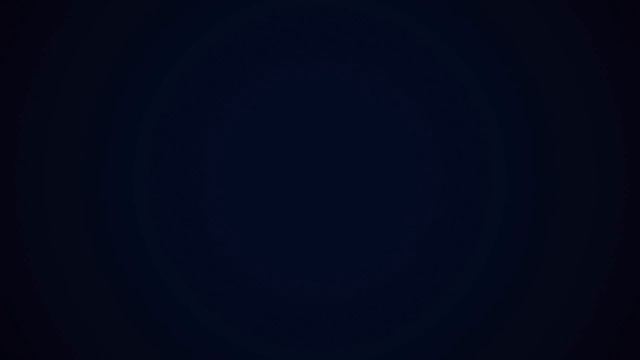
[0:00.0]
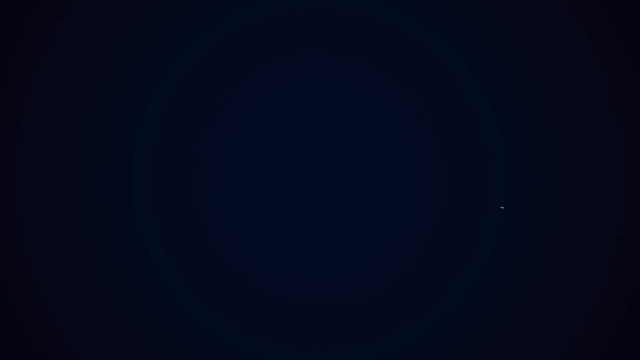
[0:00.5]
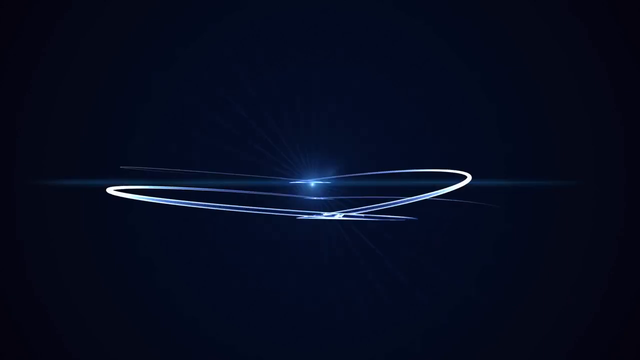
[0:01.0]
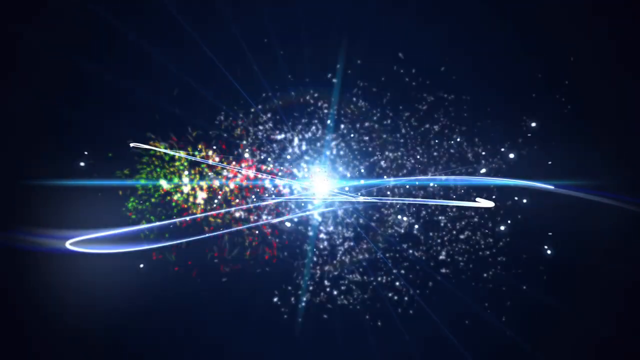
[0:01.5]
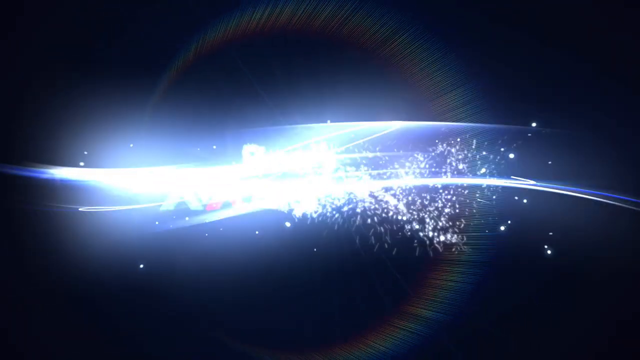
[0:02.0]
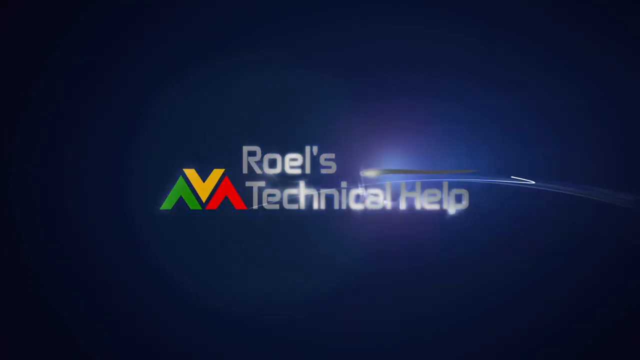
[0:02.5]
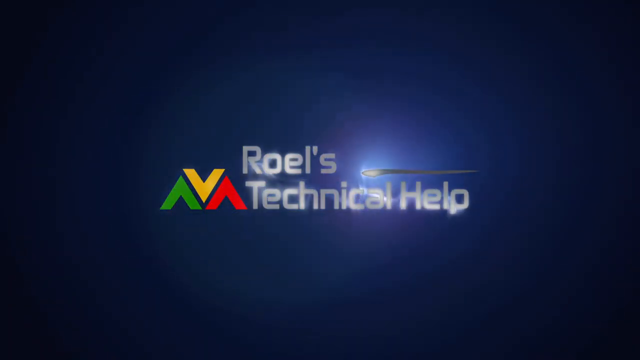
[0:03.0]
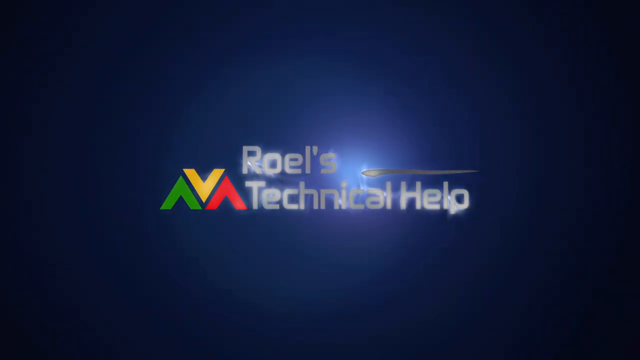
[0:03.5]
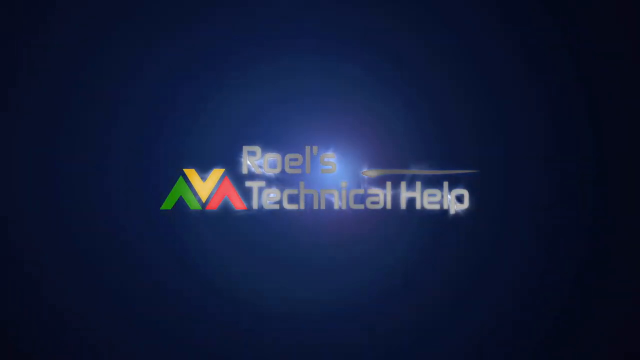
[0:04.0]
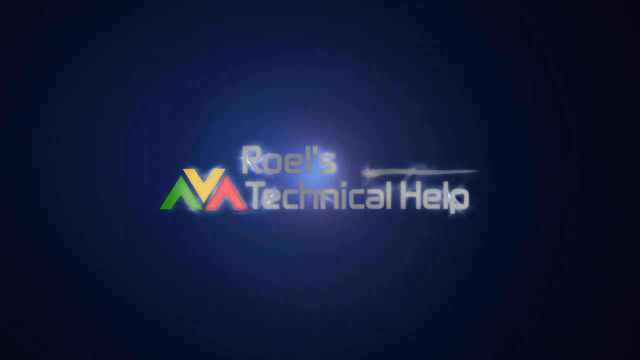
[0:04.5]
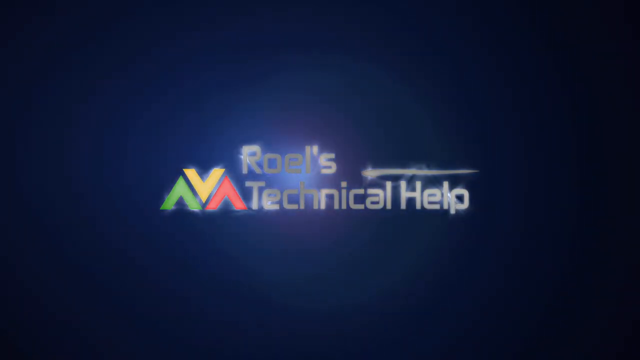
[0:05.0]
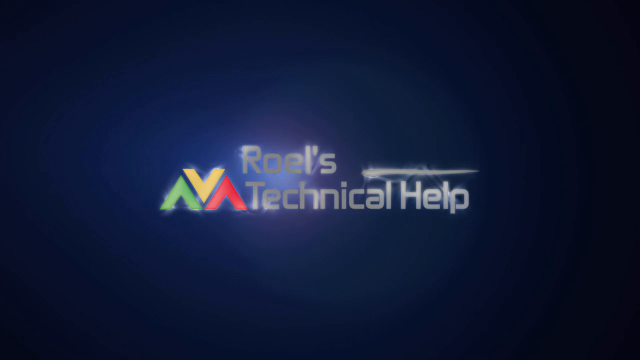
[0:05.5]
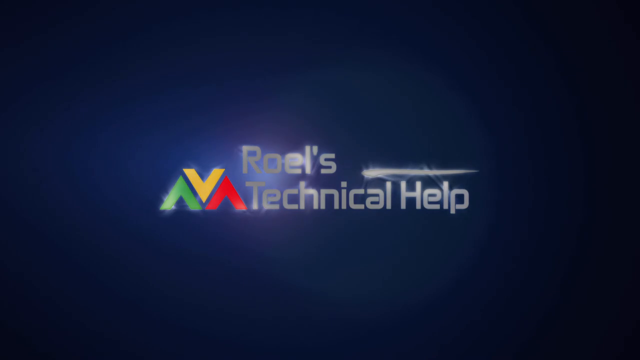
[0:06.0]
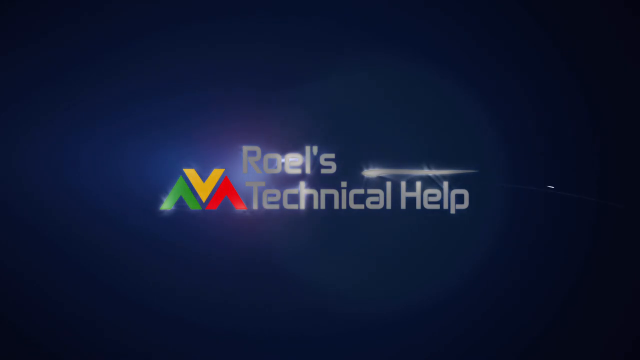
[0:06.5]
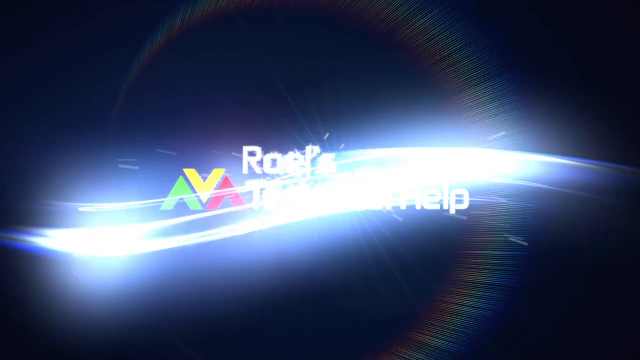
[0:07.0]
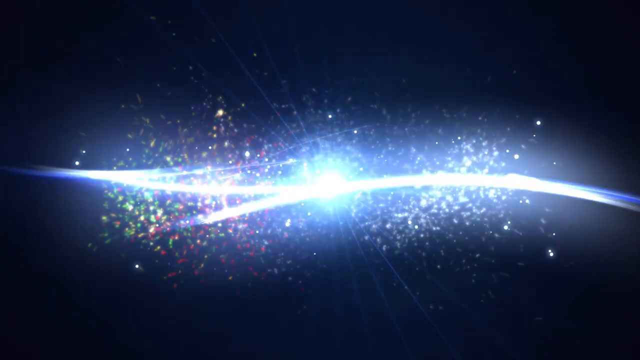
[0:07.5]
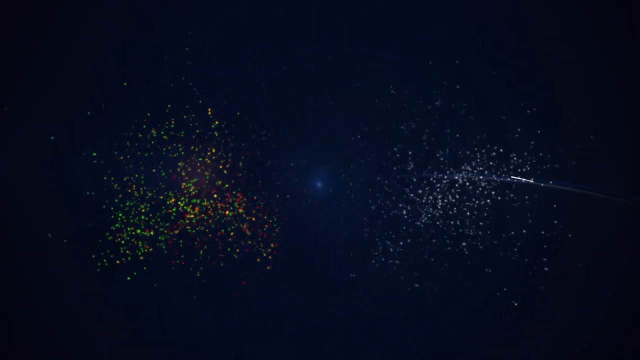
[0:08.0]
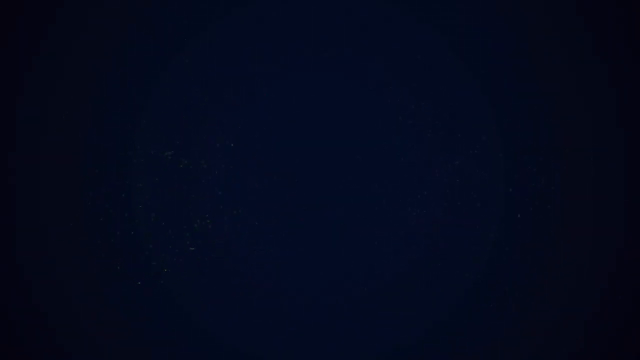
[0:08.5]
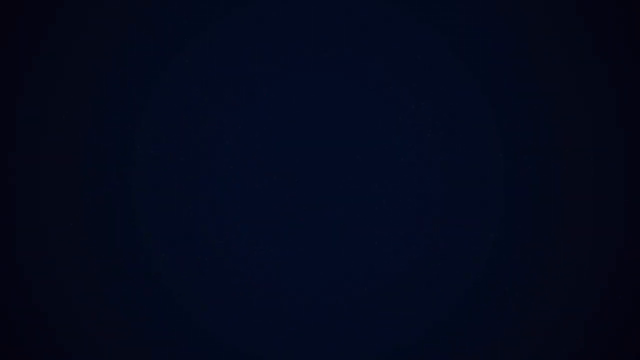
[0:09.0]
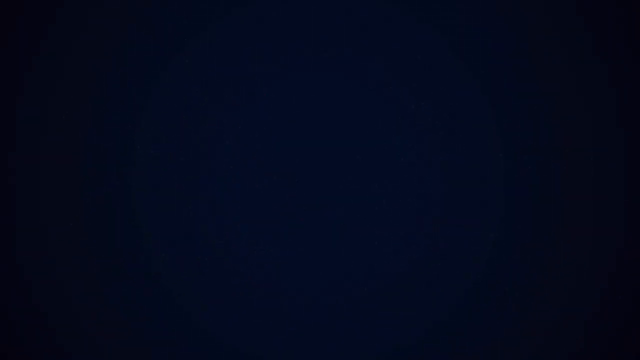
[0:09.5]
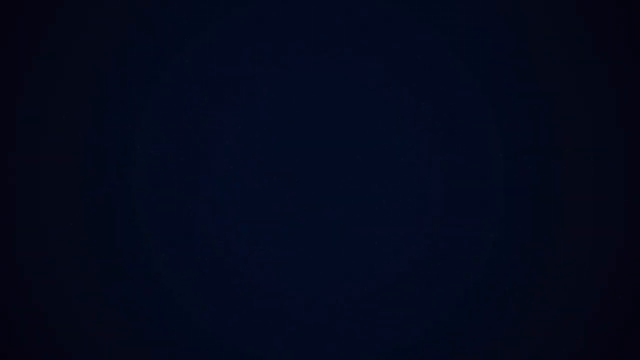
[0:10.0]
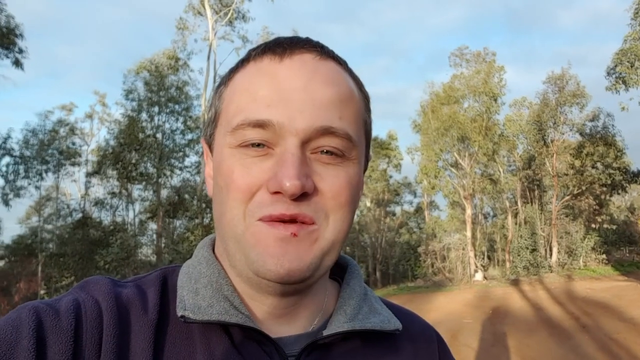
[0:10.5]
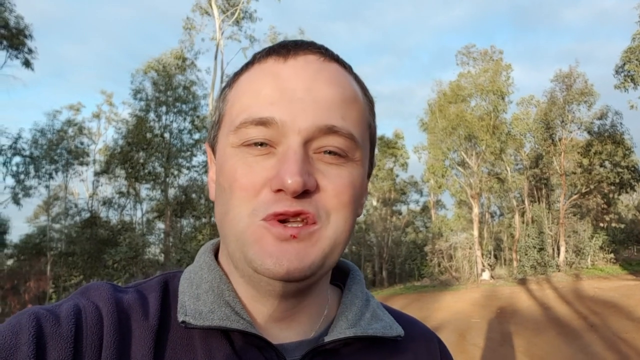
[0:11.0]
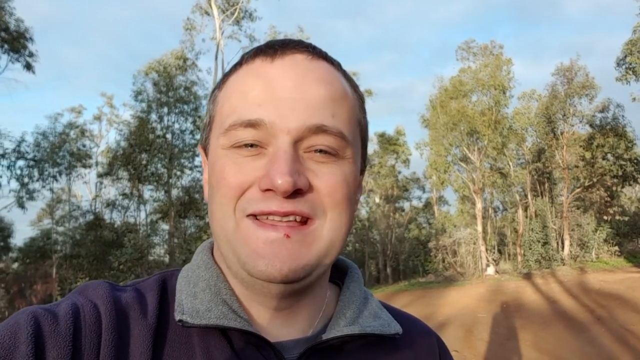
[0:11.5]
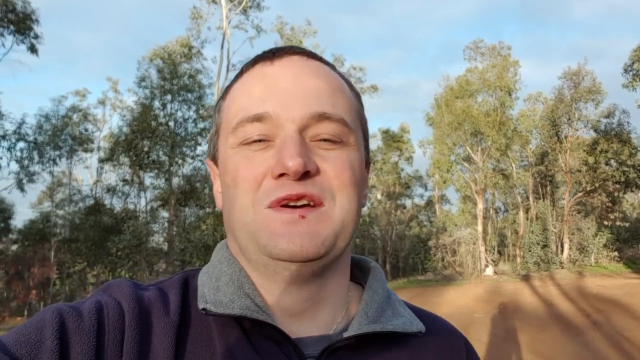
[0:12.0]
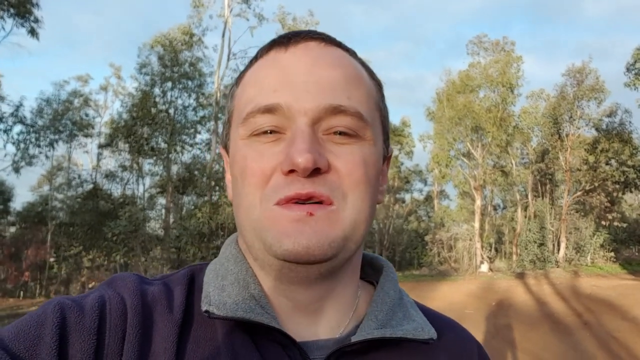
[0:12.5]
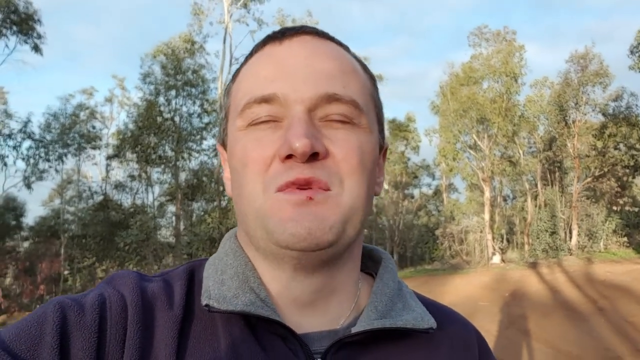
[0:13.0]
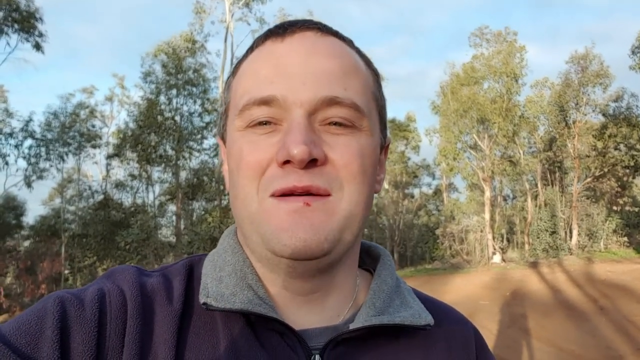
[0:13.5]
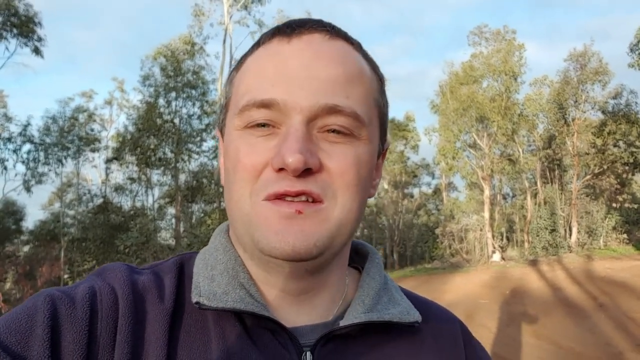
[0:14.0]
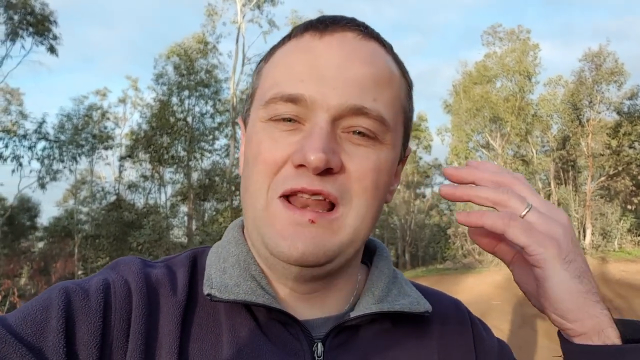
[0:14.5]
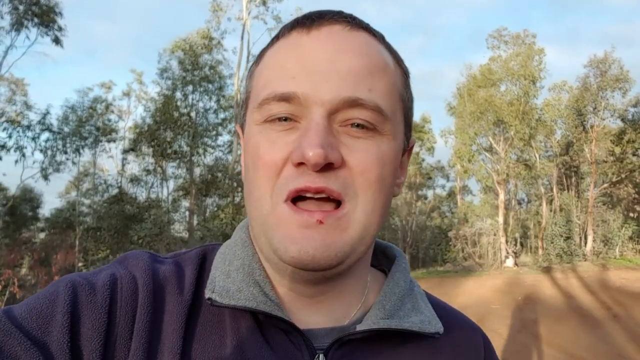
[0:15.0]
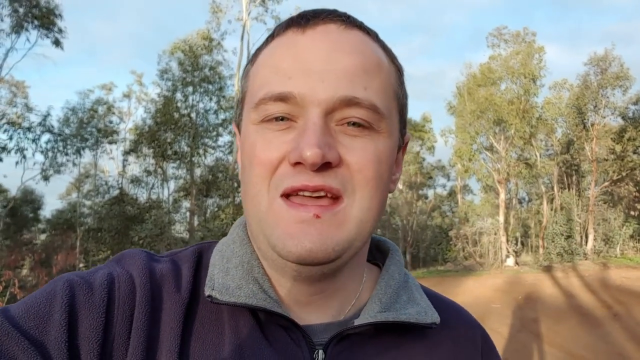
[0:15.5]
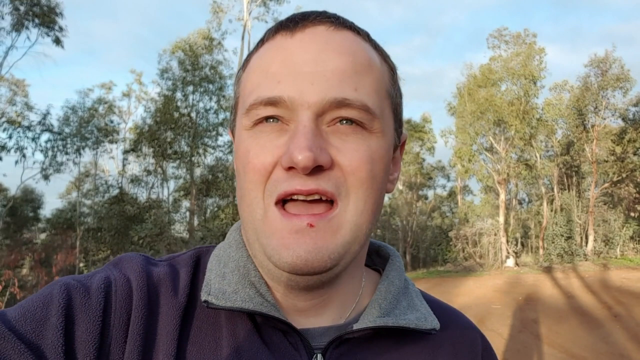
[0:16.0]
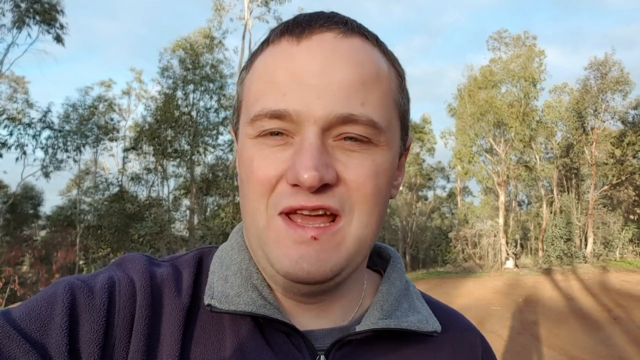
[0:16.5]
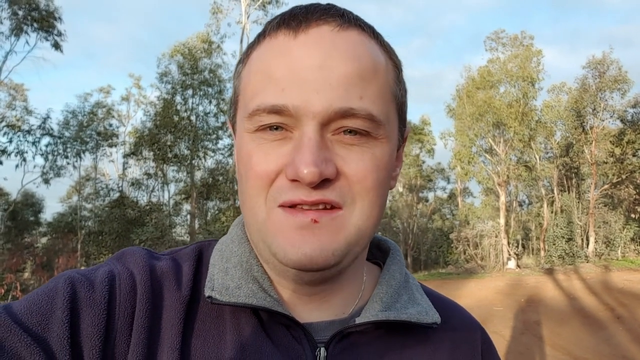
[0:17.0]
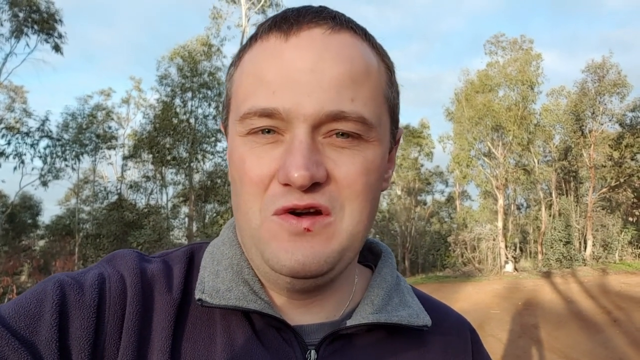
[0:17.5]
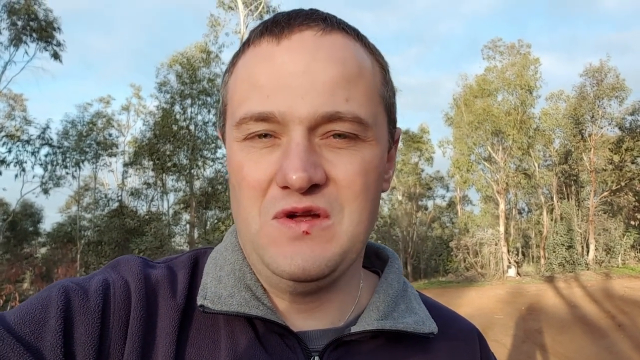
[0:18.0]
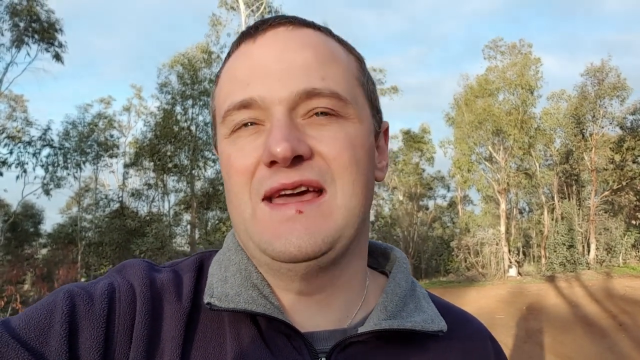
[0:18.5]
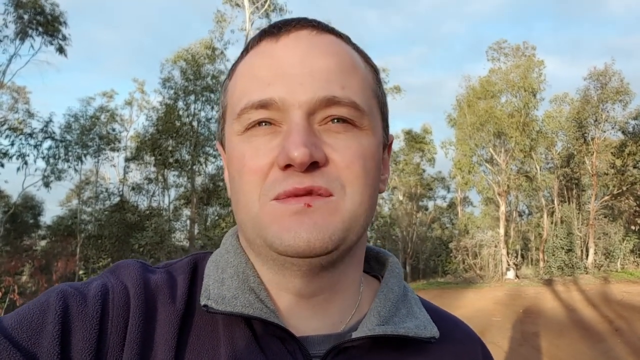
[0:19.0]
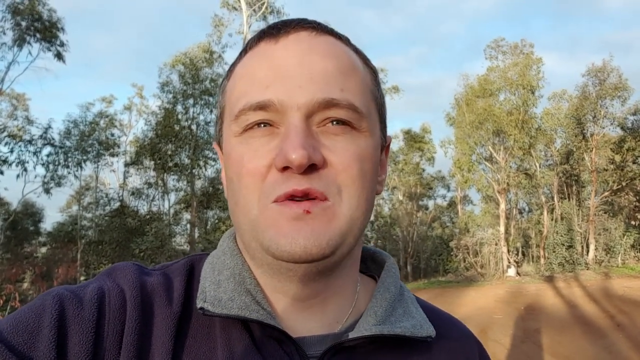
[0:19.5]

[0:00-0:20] The video opens on a dark blue screen that is almost black. A white fluorescent light sweeps across the screen and lights it up, with sparkles of different colors in the background. Text on the screen then reads "Roelle's Technical Help," accompanied by three triangles: a green one that is right side up with no bottom, a yellow one to its right that is upside down, and a red one to the right of that which is right side up. A light source passes behind the writing, and the writing disappears. The video then flashes to a man who appears to be in his 30s, a white male with short brown hair that is gray on the sides. He wears a blue jacket with a gray hood and holds the camera selfie-style, showing just his head and shoulders. Behind him is a field with trees and dirt, and the sky is clear and blue. He is talking and has a cut on his bottom lip.